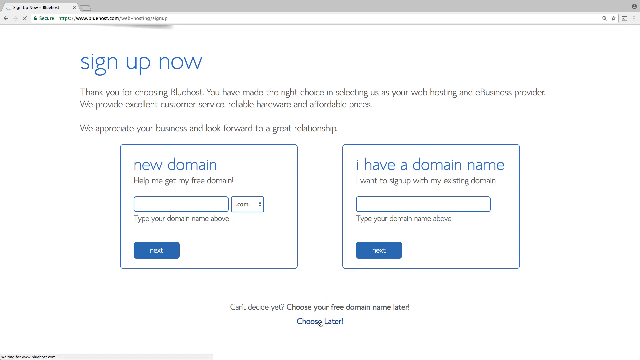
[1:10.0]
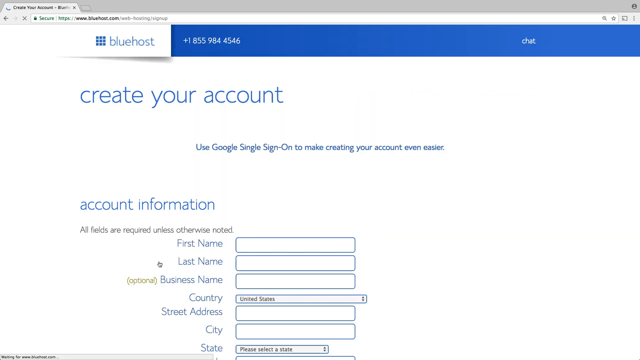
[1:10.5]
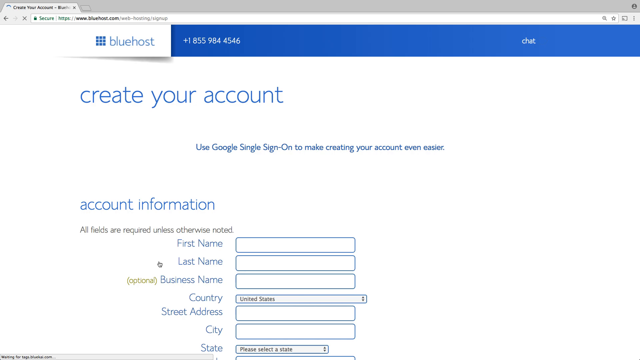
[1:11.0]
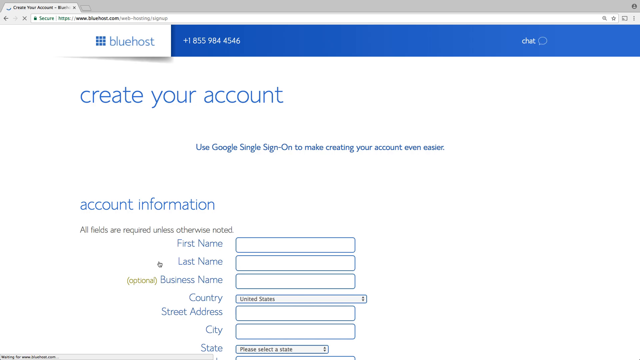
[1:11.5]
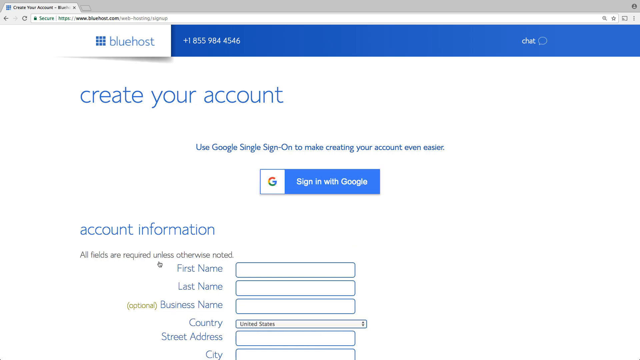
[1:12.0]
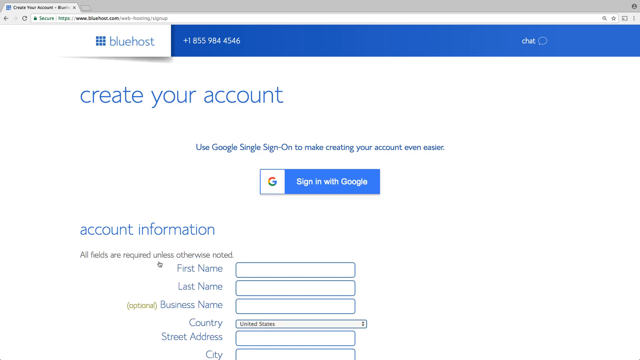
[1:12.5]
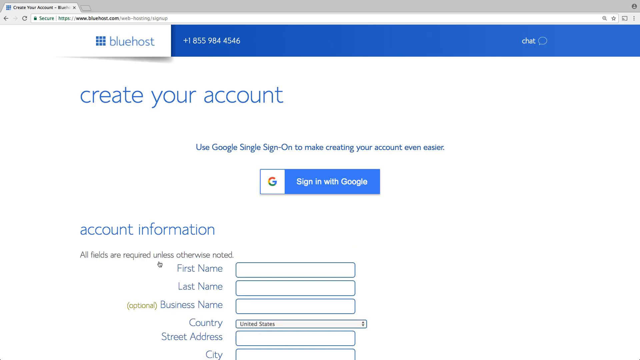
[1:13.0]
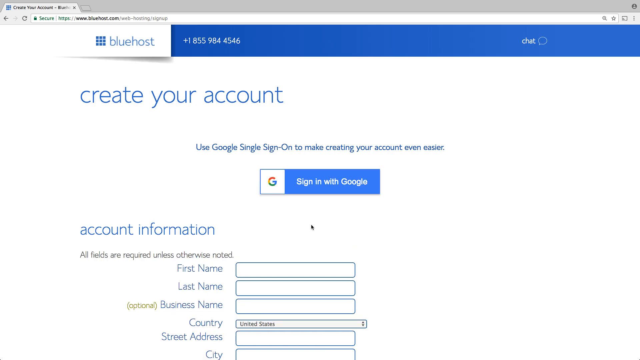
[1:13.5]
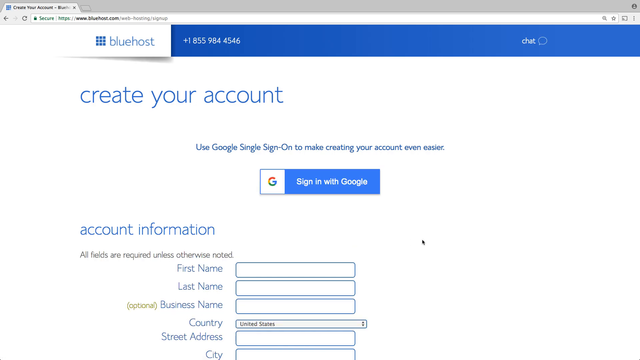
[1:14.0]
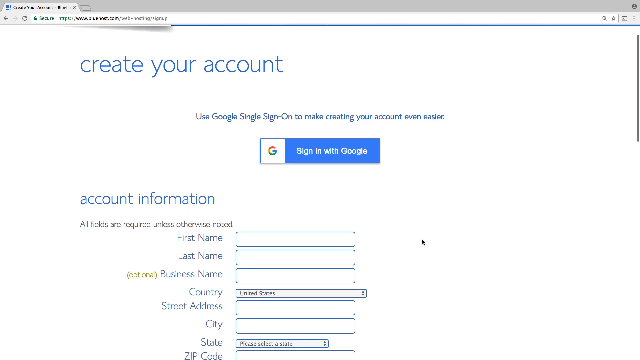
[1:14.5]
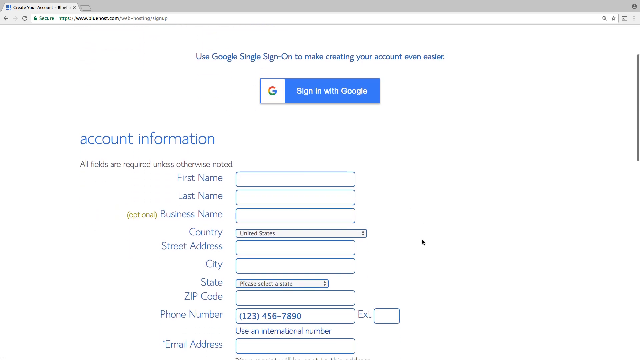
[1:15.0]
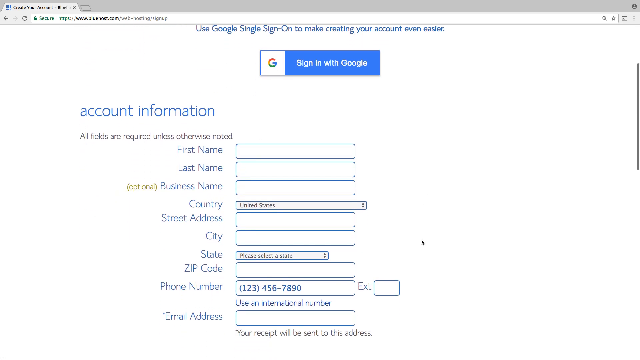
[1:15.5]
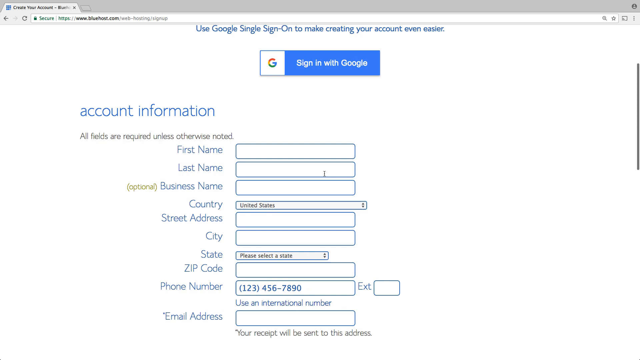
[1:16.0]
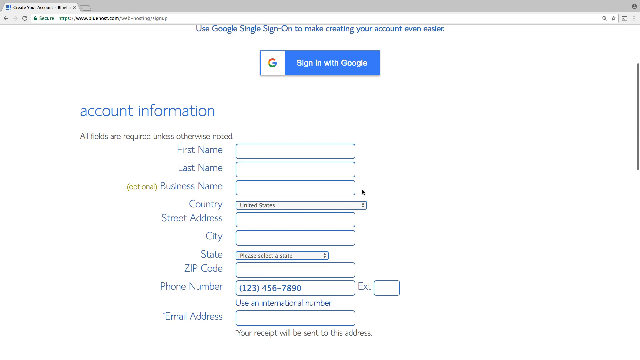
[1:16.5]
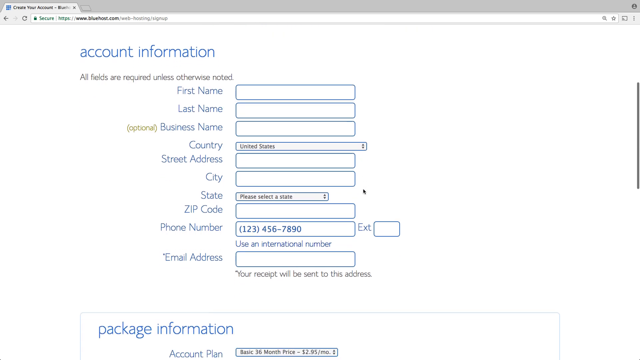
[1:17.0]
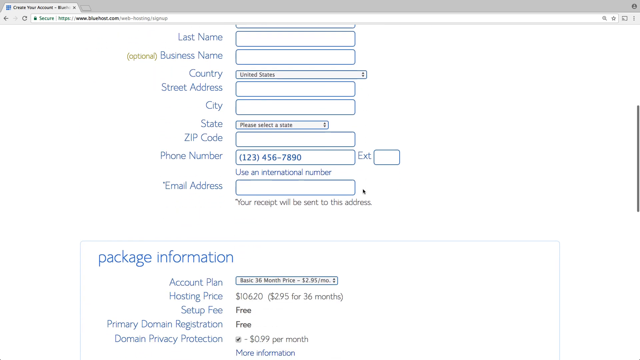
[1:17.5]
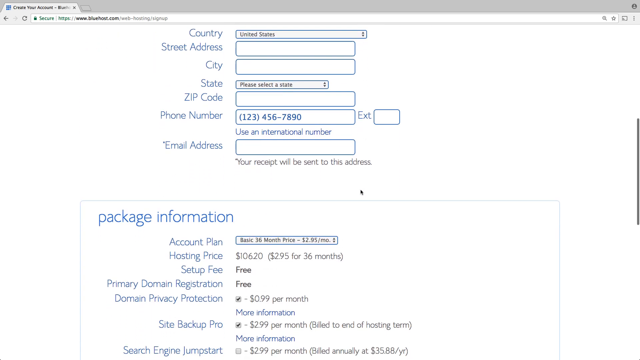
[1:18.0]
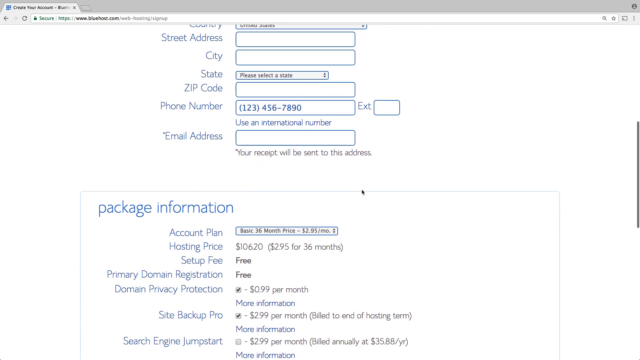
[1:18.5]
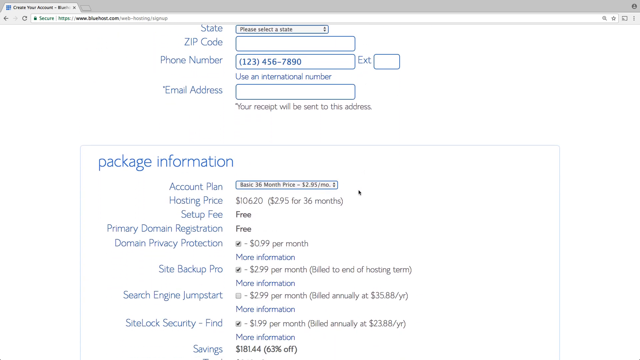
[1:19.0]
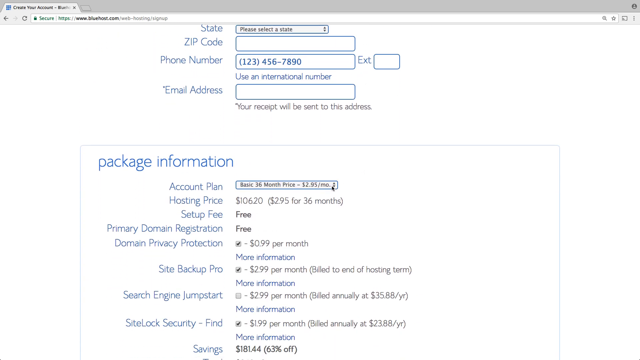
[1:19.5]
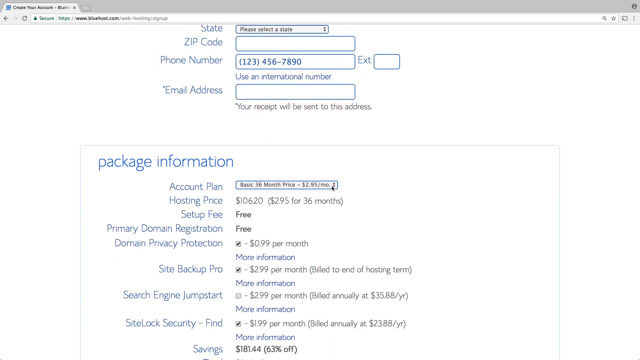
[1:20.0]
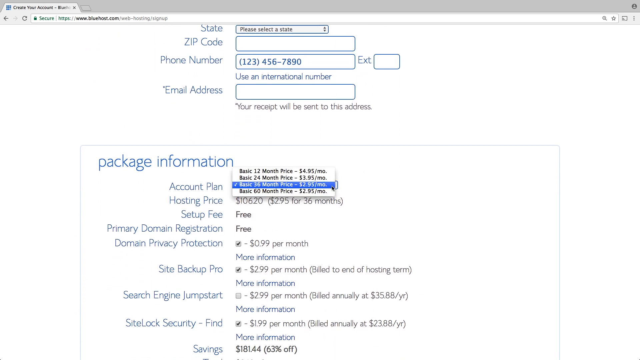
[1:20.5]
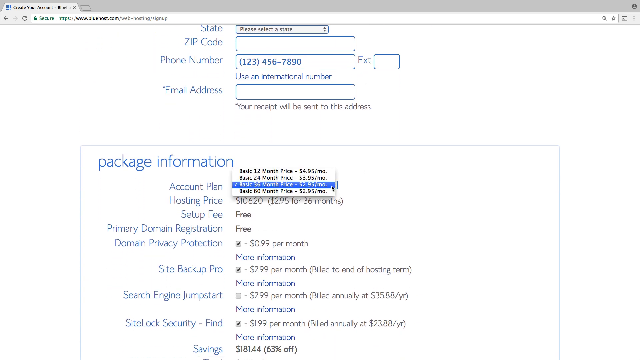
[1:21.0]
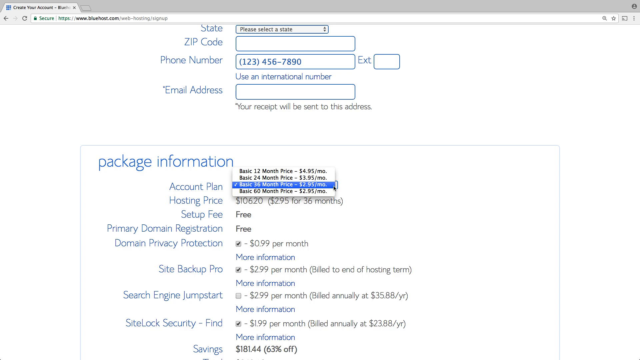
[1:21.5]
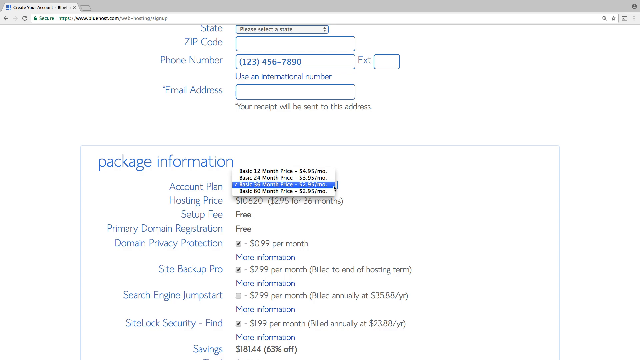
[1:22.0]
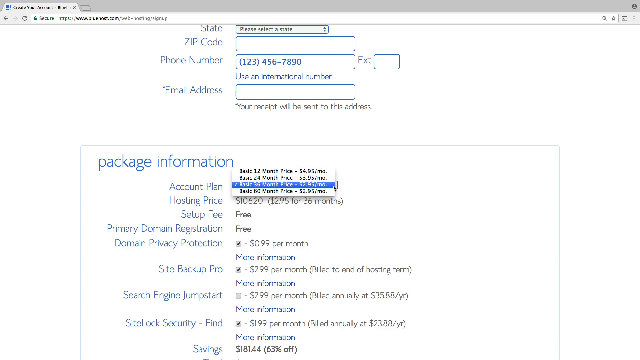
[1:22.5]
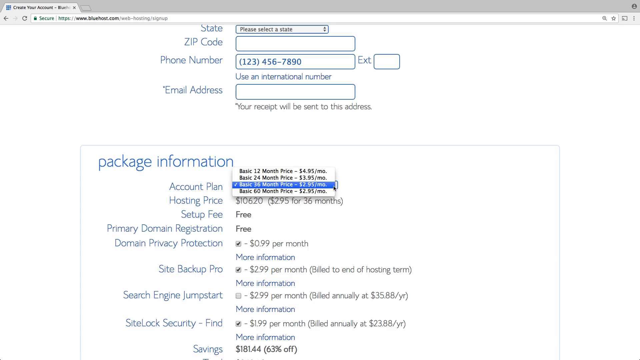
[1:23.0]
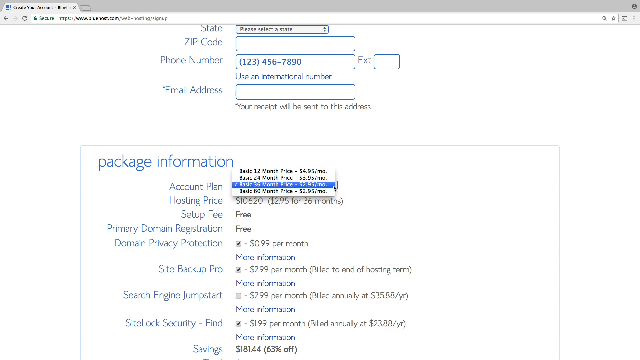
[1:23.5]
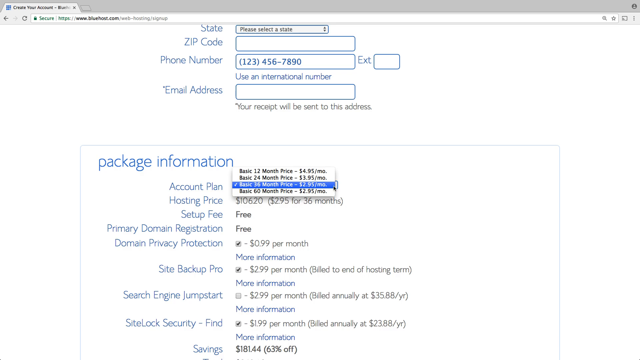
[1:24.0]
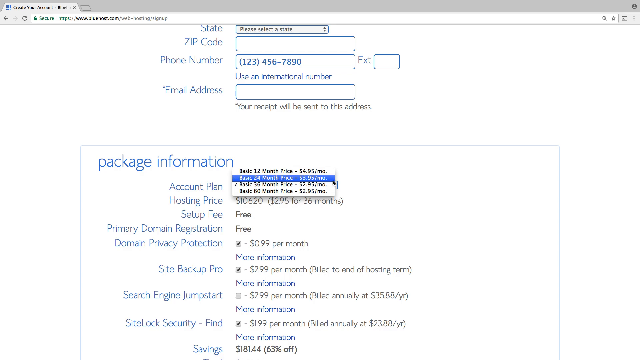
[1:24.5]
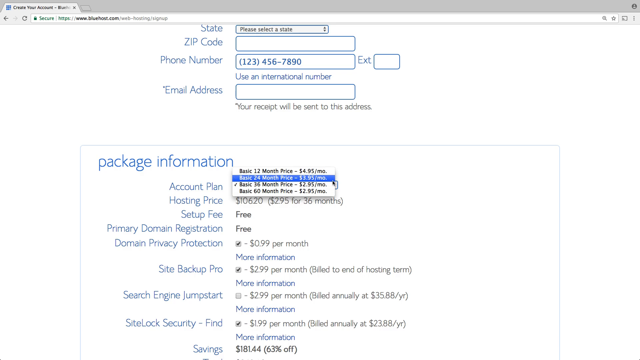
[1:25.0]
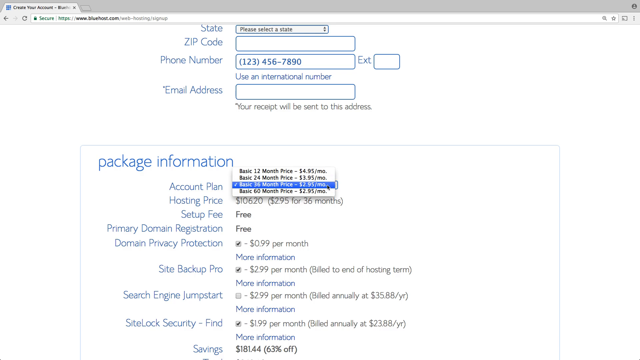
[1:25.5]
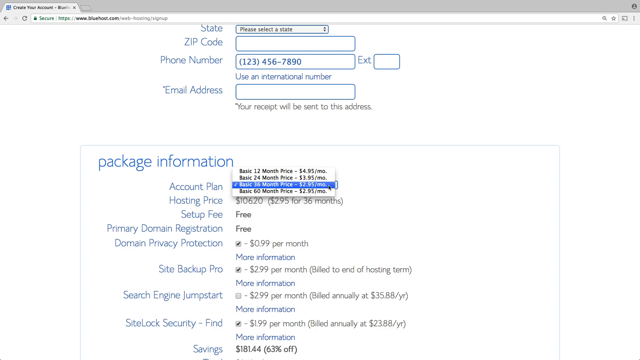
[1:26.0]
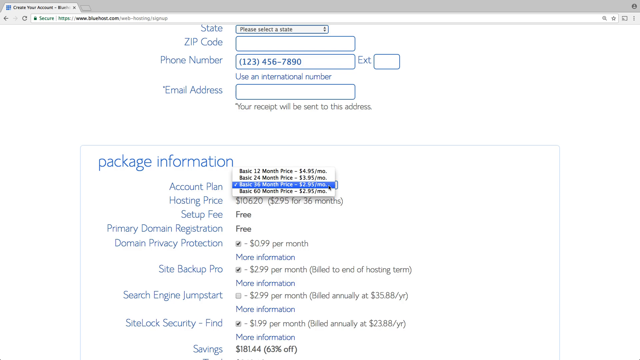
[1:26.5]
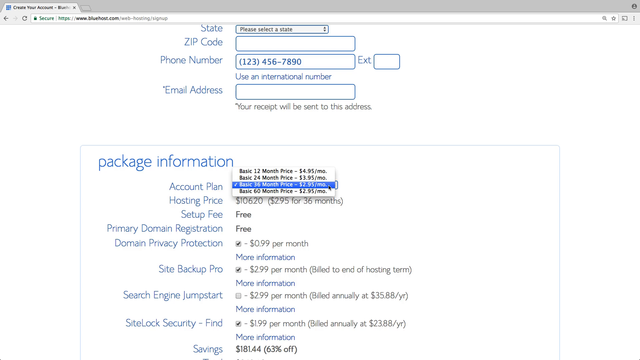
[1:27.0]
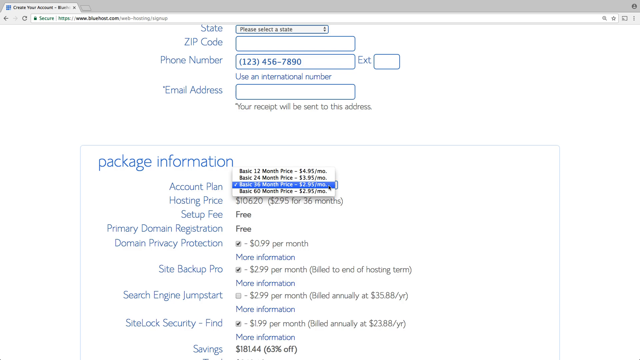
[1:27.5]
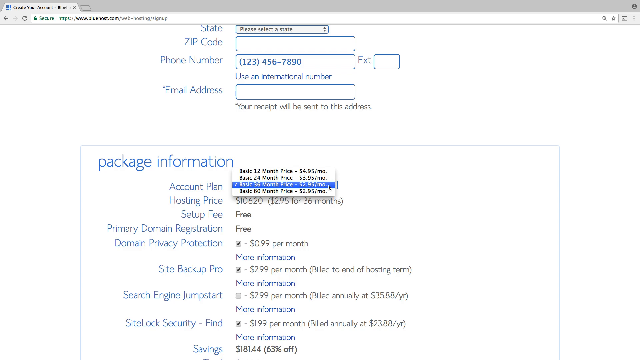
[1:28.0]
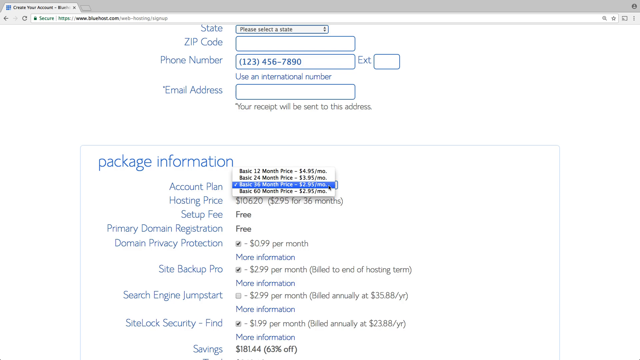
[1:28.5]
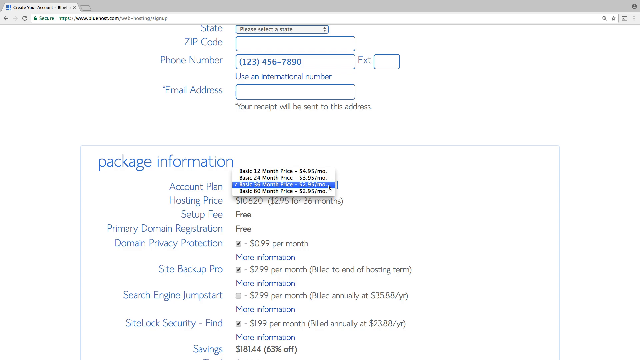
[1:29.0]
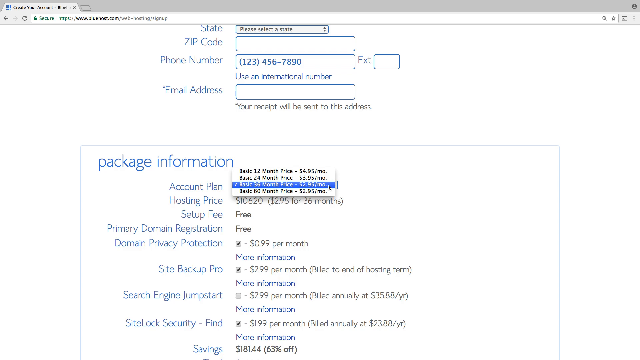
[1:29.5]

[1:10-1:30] An account page offers sign-in with Google and asks for the user's information, including zip code, phone number, and email address. It lists account plans, hosting prices, setup fees, privacy, primary domain registrations, and domain privacy protection, plus an option to back up the website for apparently three additional dollars per month. The page has a white background with blue lettering; it looks professionally done but also kind of cookie-cutter.